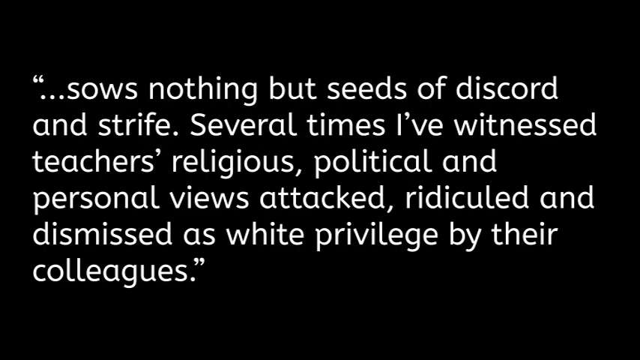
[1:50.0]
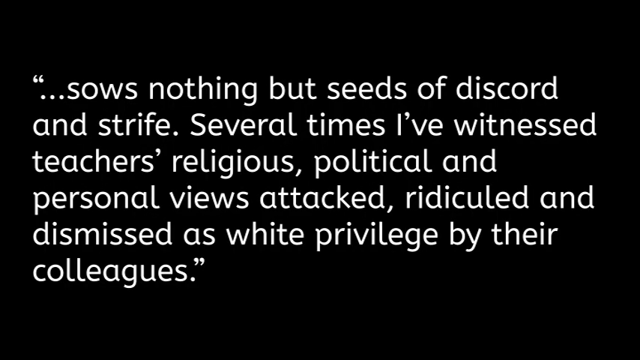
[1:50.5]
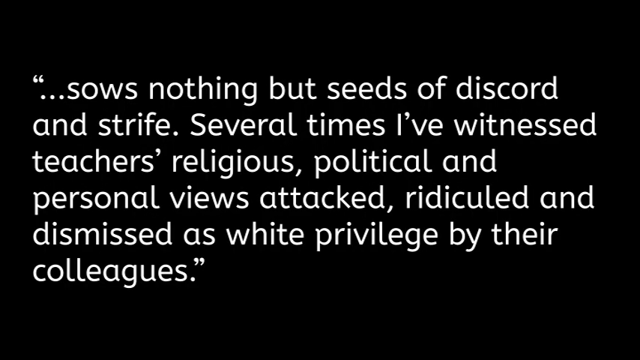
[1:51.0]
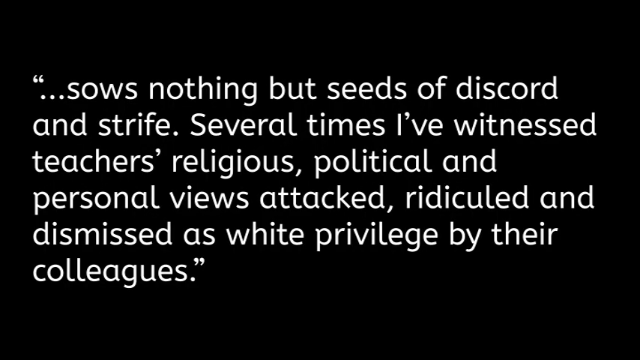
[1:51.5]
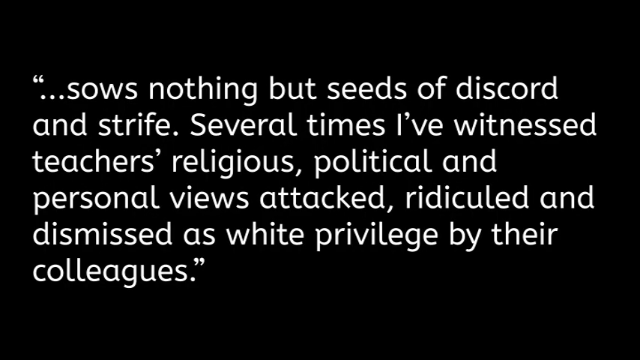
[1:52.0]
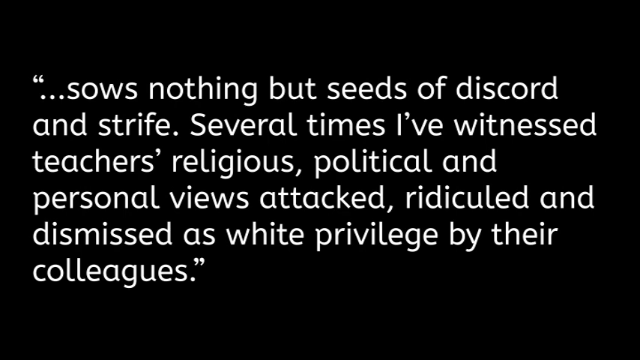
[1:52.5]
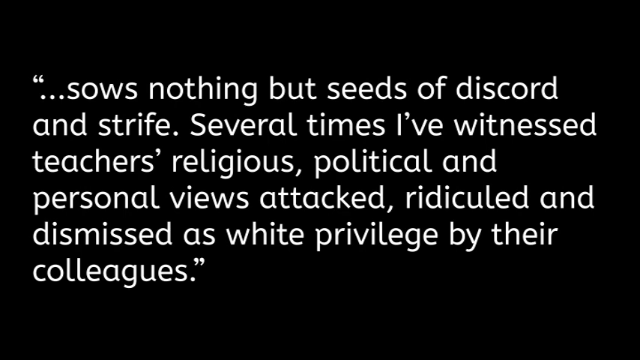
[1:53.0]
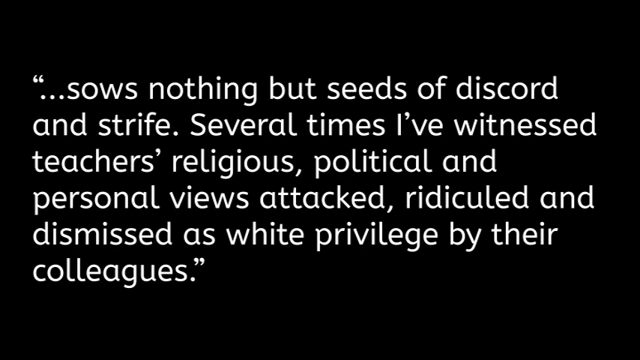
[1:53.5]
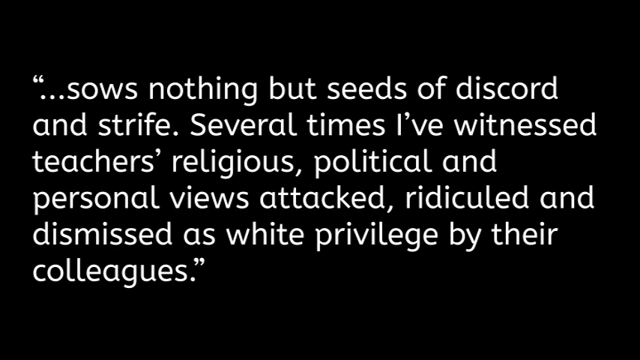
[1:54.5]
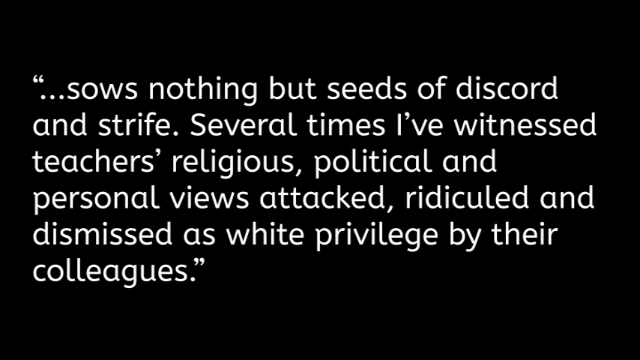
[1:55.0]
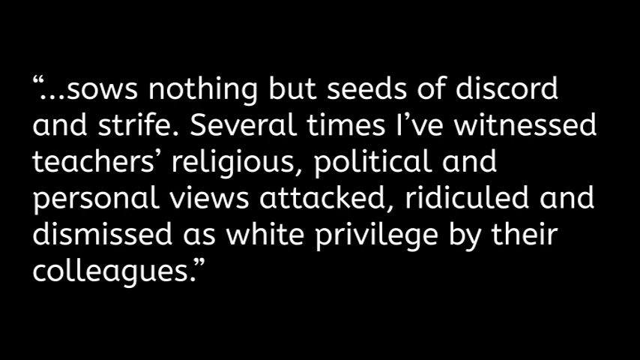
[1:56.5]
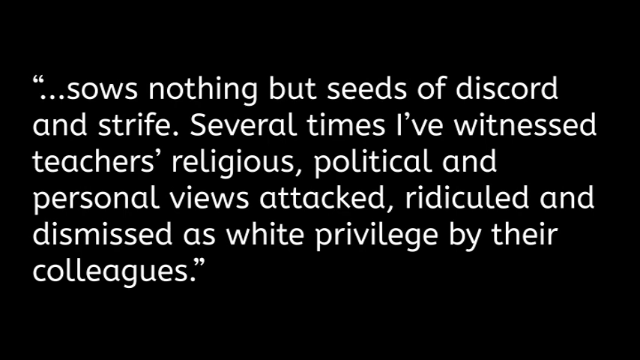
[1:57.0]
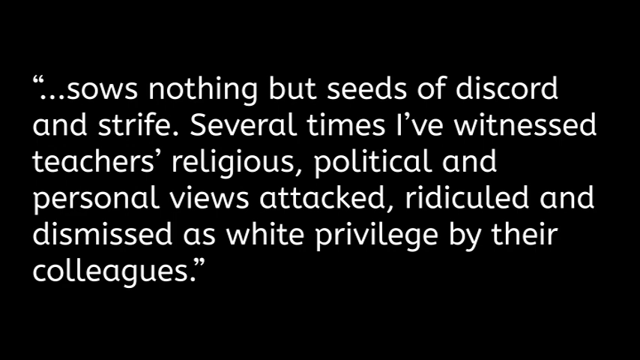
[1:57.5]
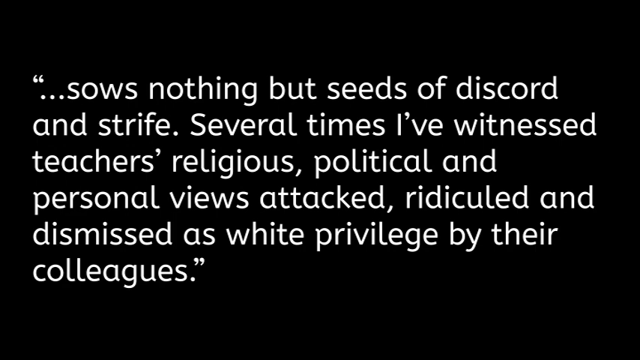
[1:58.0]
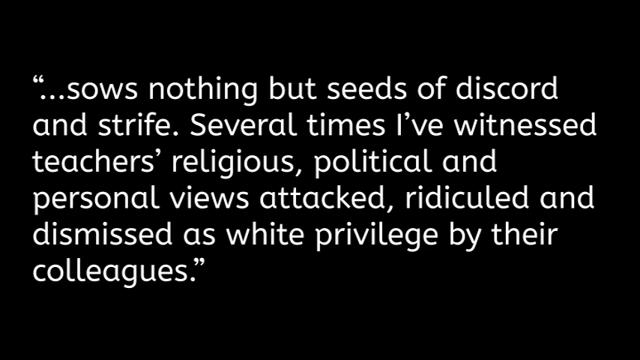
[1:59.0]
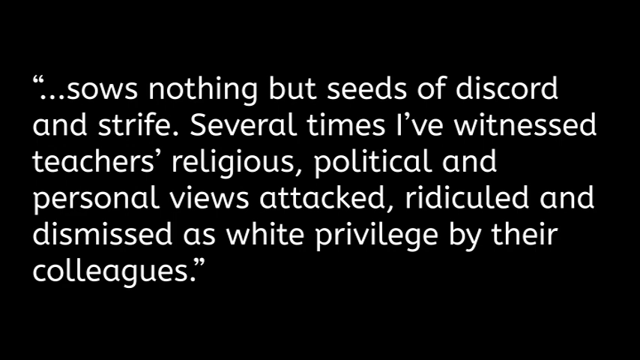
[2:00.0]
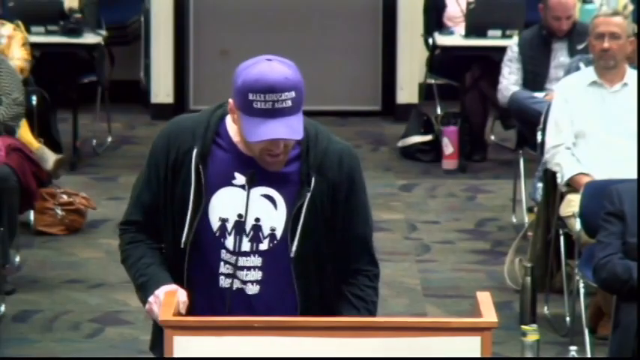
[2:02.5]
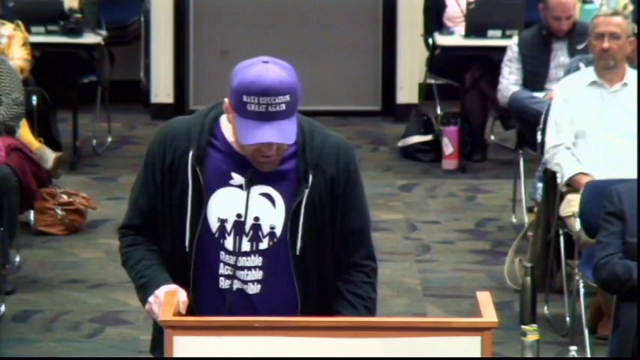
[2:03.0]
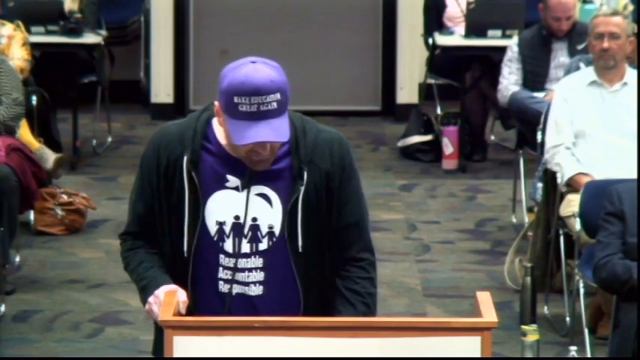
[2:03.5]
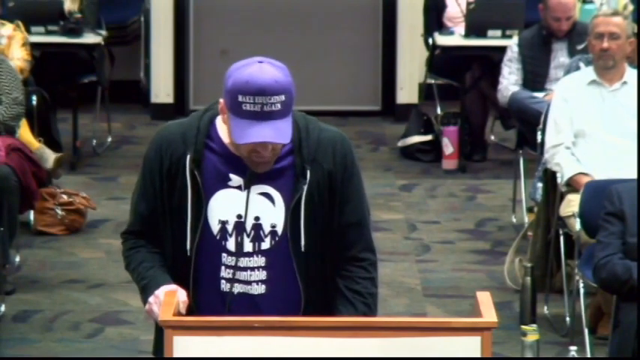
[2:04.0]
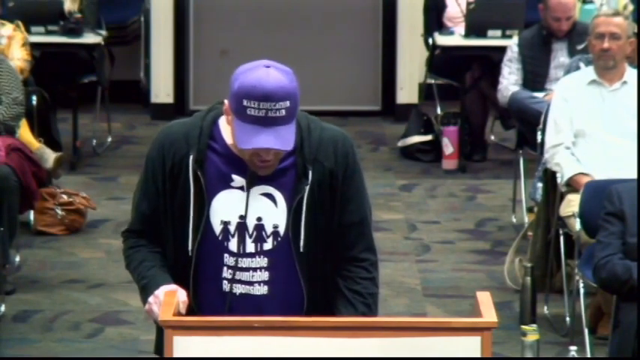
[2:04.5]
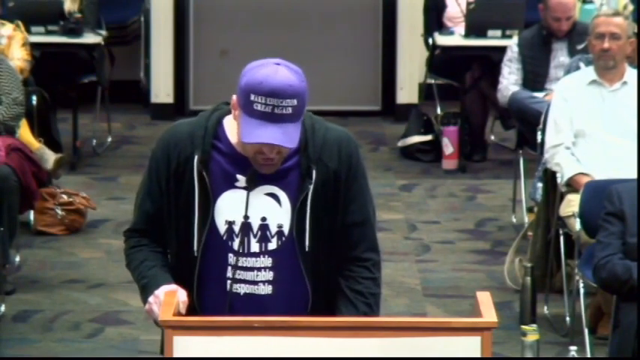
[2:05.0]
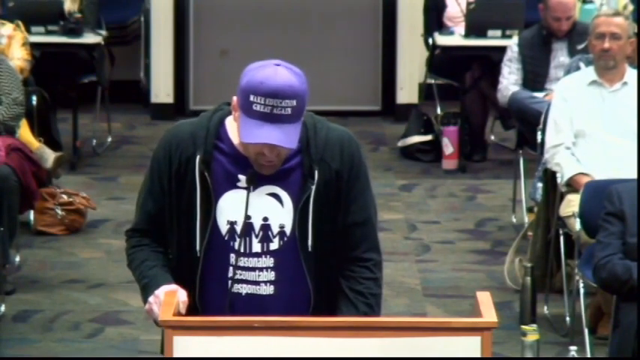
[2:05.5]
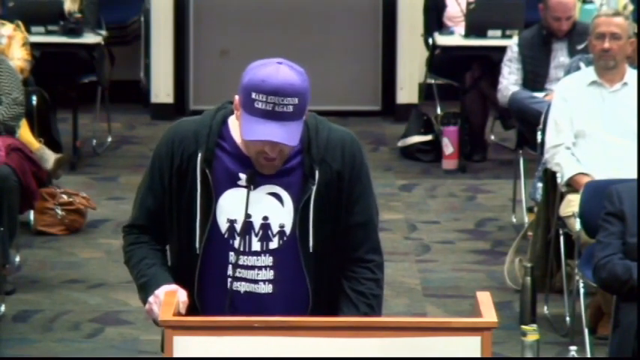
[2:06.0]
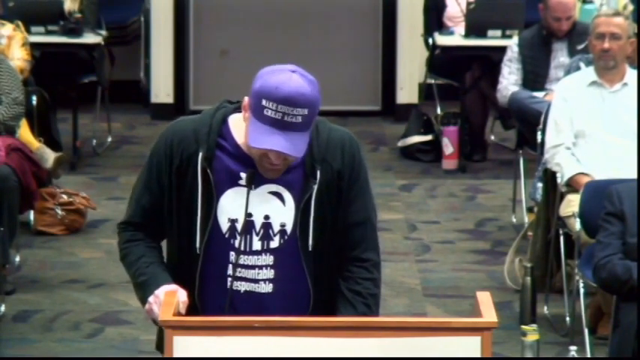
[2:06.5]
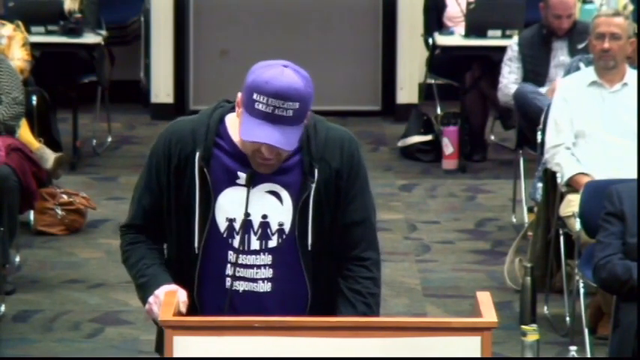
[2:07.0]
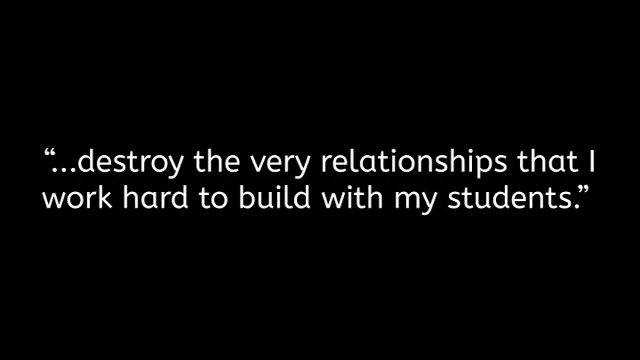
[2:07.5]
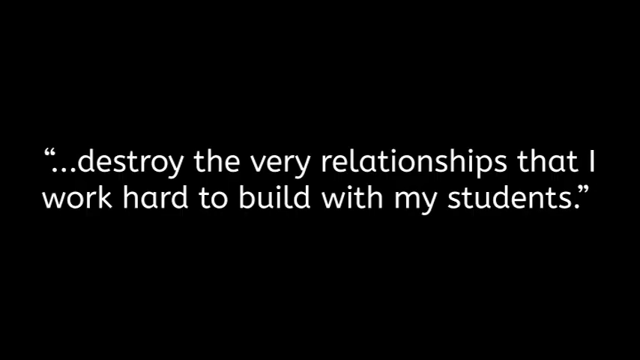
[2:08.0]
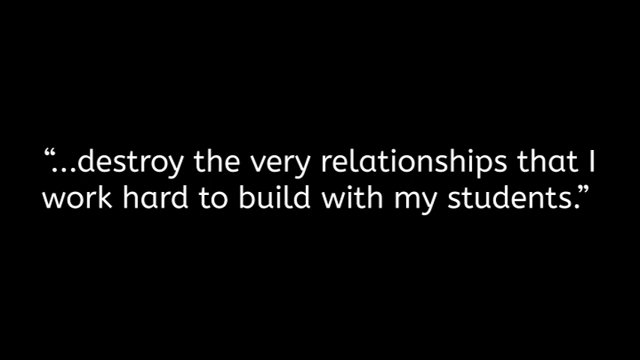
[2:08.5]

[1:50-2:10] The continuation of a quote reads: "...sows nothing but seeds of discord and strife. Several times I've witnessed teachers' religious, political, and personal views attacked, ridiculed, and dismissed as white privilege by their colleagues." The video then goes back to a white man talking, wearing a purple t-shirt and cap that both have white printing. Another quote follows: "destroy the very relationships that I work hard to build with my students," and then the quote goes on to say again "sows nothing but seeds of discord and strife. Several times I witnessed teachers' religious, political, and personal views attacked, ridiculed, and dismissed as white privilege by their colleagues." The quotes are printed in white on a black background, contrasting with the scene of the man talking and the people around him in the room.